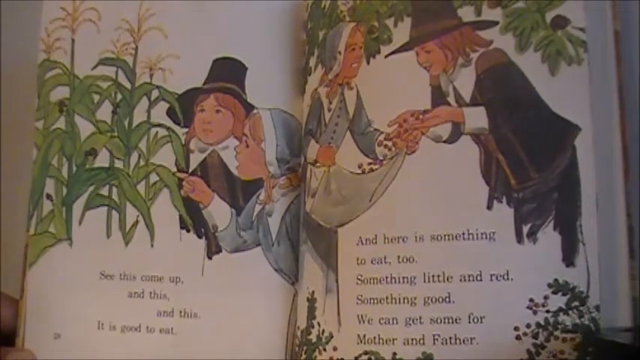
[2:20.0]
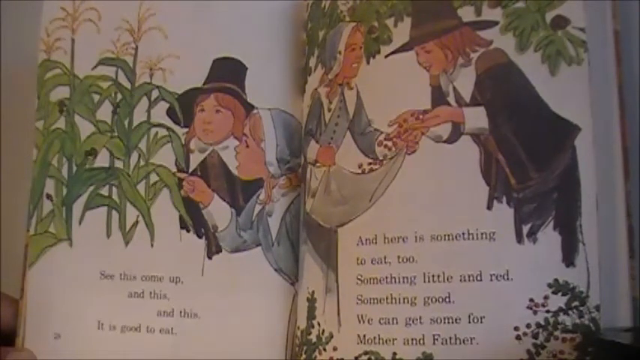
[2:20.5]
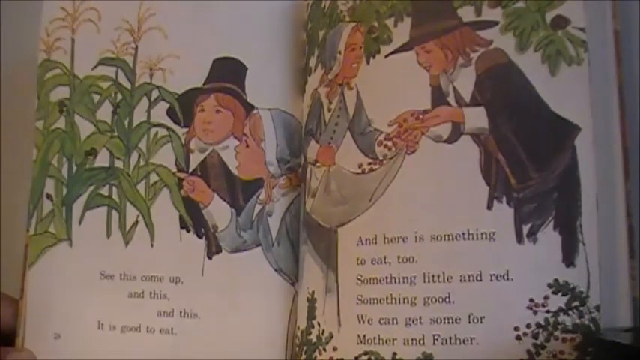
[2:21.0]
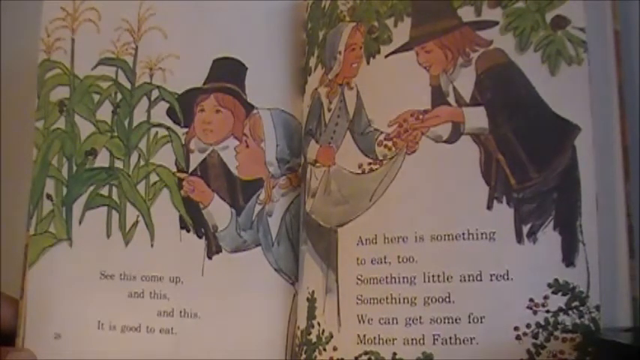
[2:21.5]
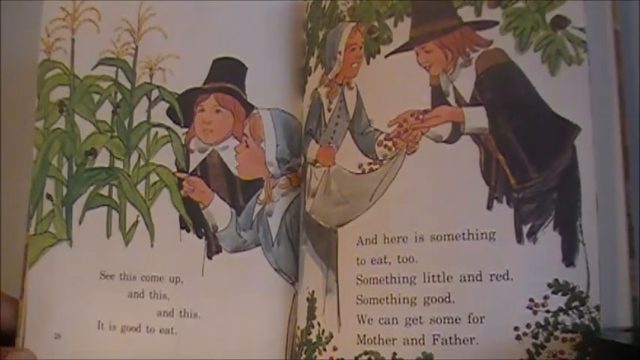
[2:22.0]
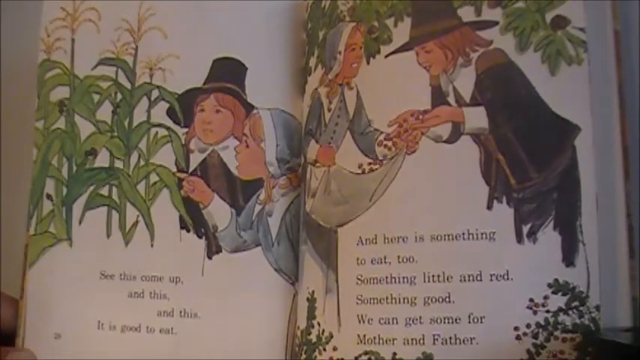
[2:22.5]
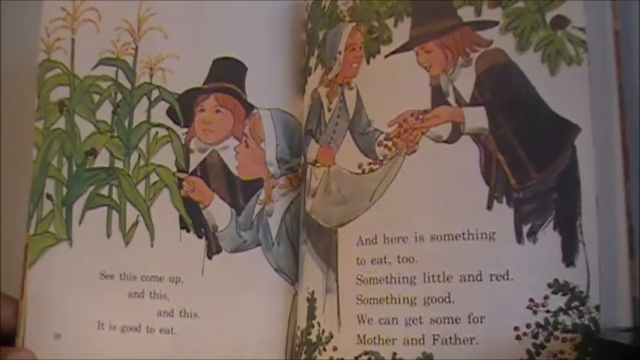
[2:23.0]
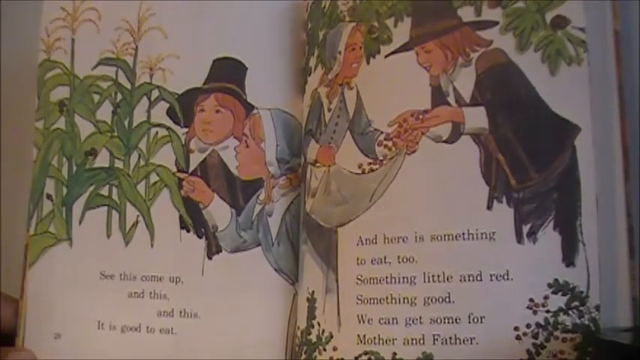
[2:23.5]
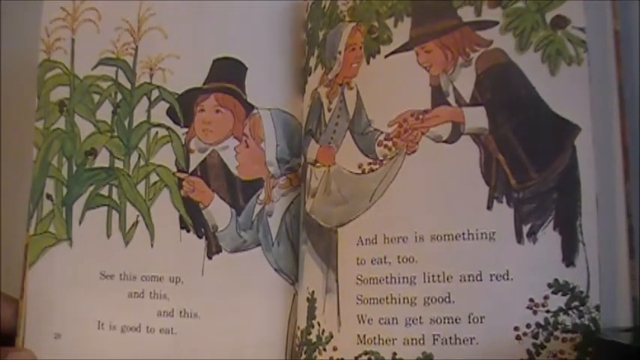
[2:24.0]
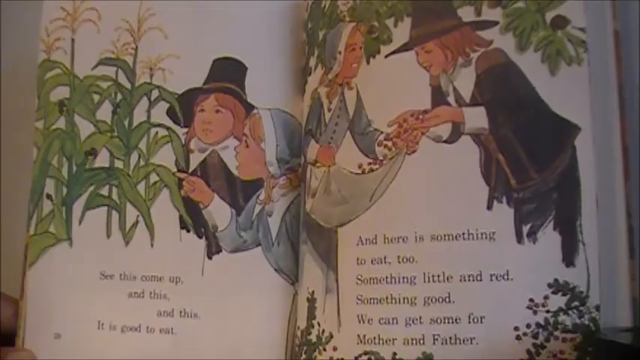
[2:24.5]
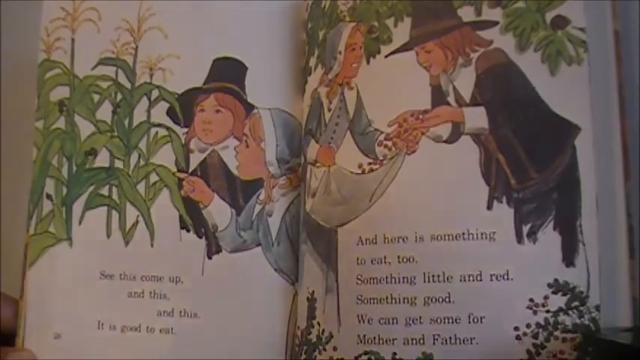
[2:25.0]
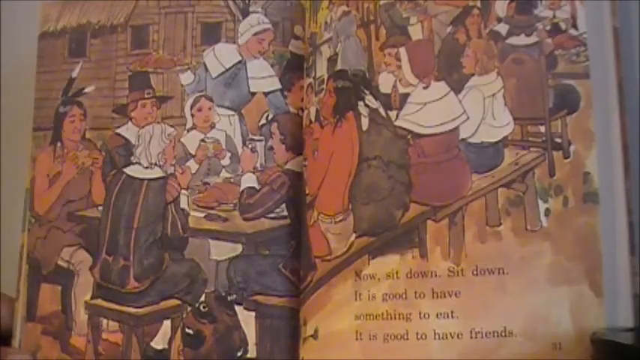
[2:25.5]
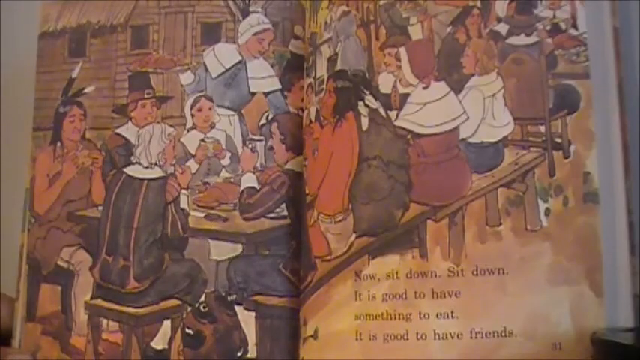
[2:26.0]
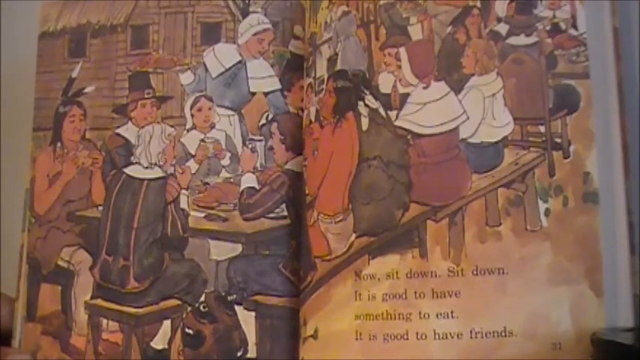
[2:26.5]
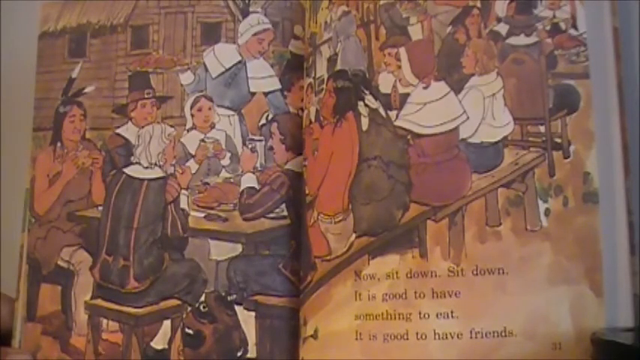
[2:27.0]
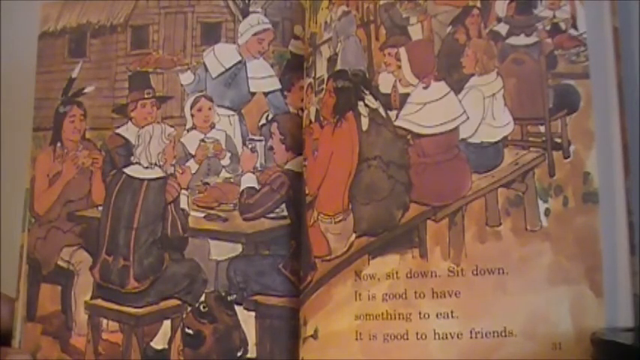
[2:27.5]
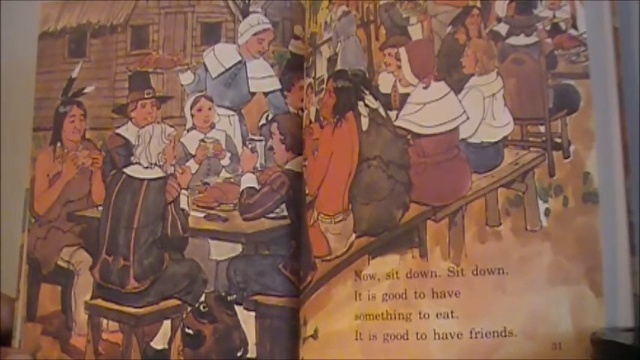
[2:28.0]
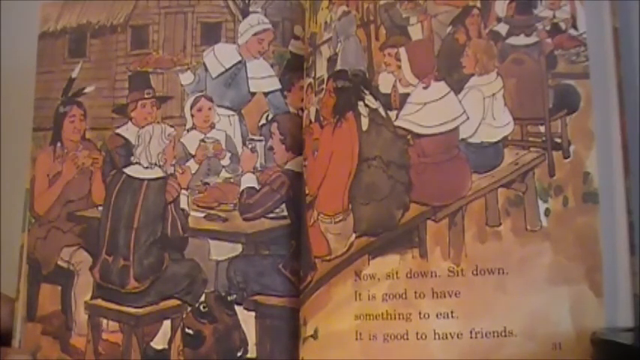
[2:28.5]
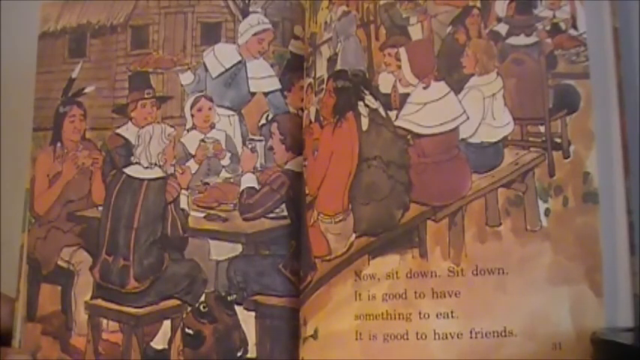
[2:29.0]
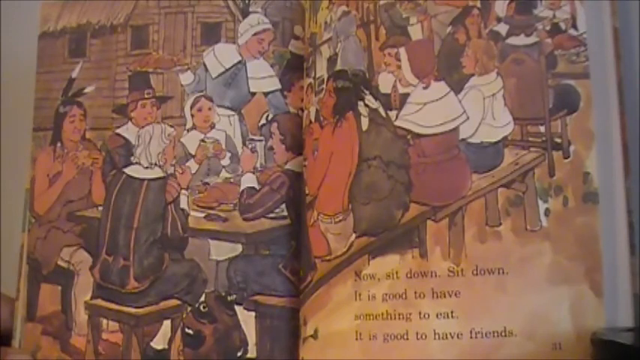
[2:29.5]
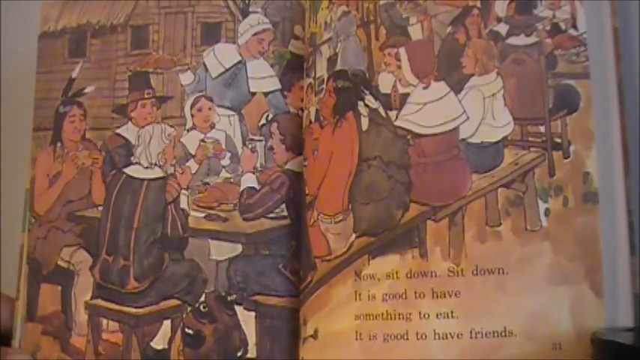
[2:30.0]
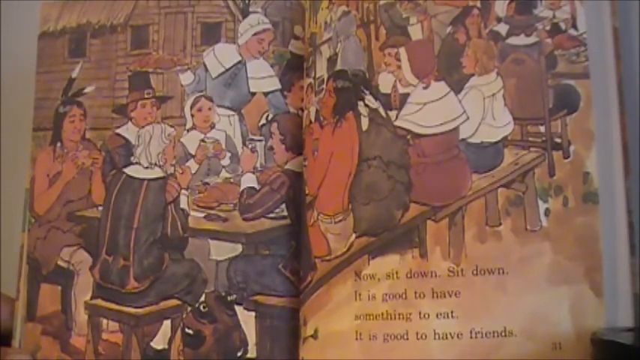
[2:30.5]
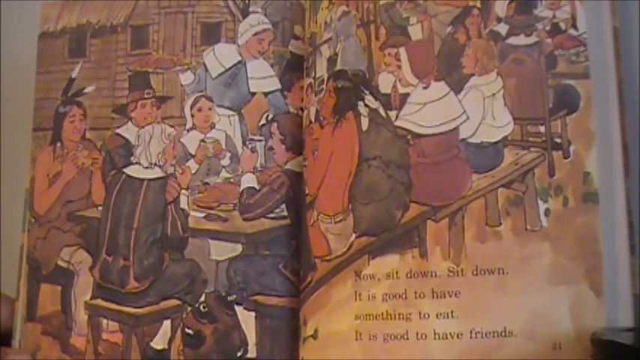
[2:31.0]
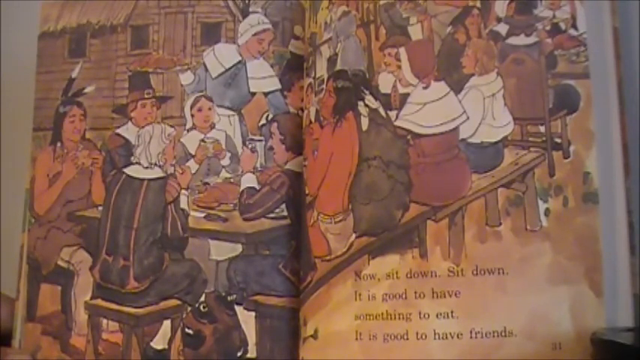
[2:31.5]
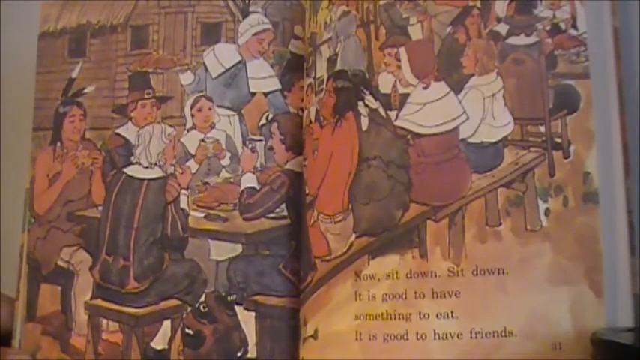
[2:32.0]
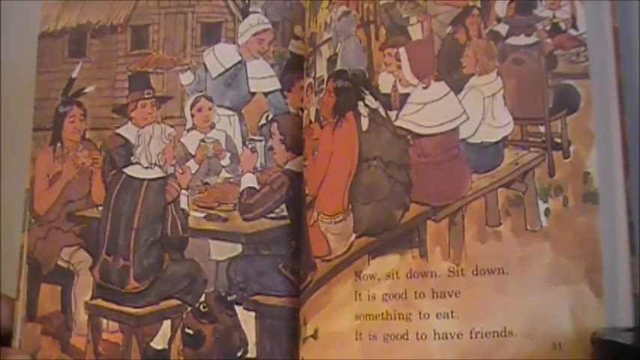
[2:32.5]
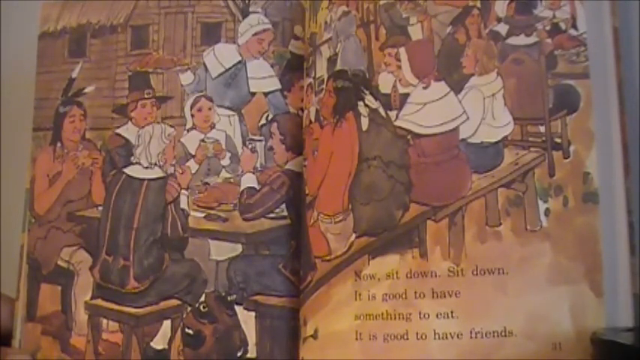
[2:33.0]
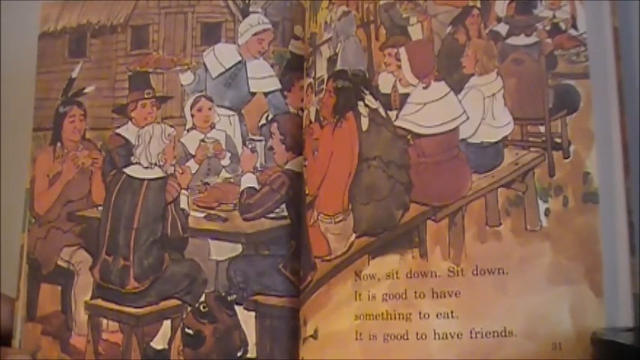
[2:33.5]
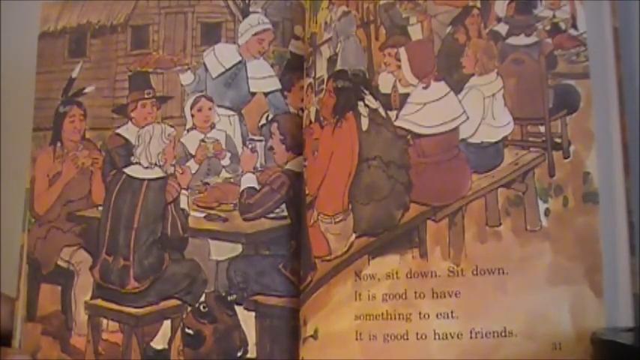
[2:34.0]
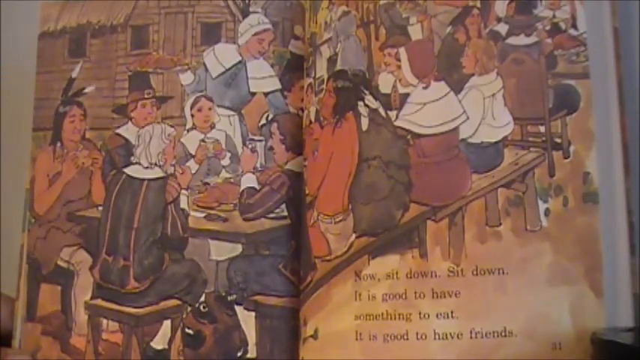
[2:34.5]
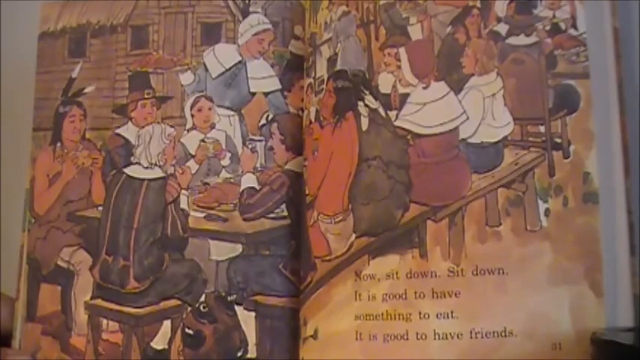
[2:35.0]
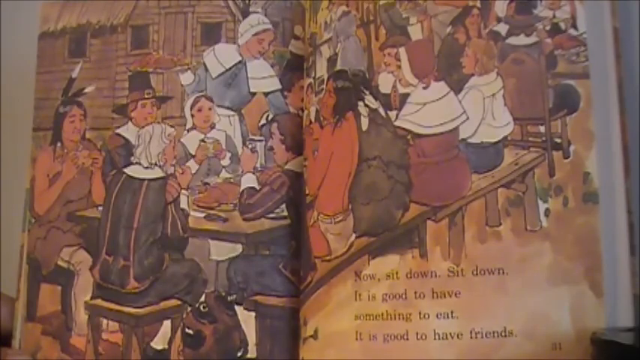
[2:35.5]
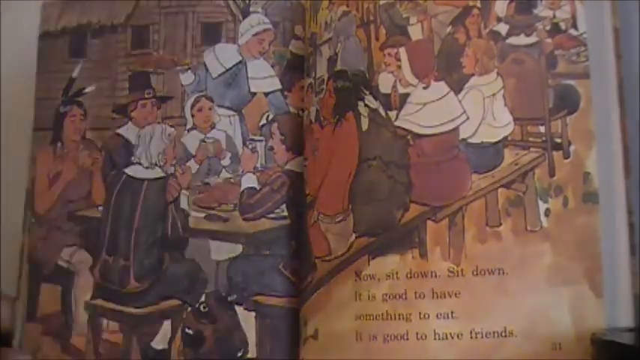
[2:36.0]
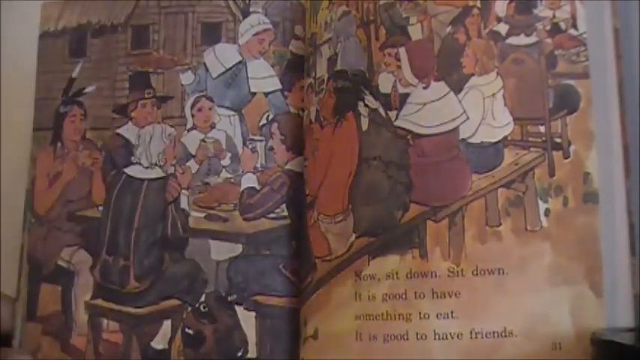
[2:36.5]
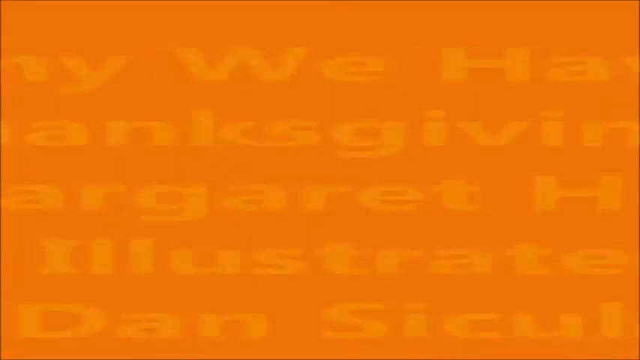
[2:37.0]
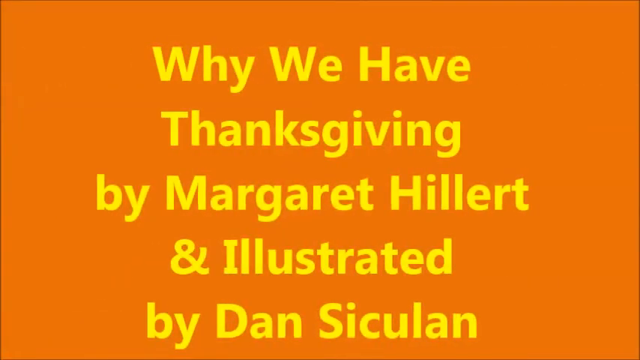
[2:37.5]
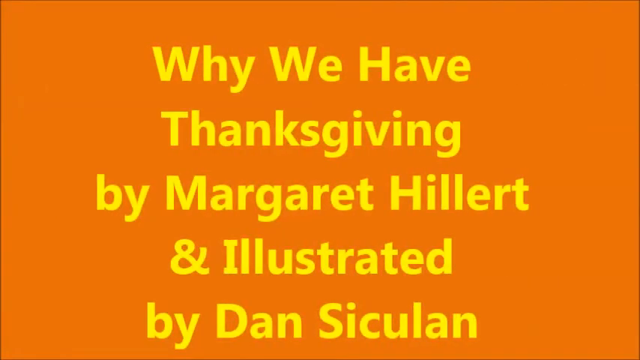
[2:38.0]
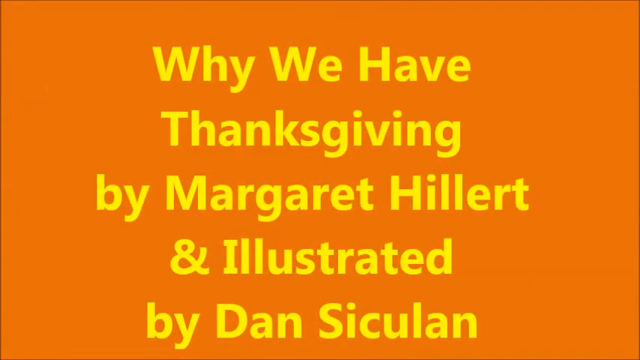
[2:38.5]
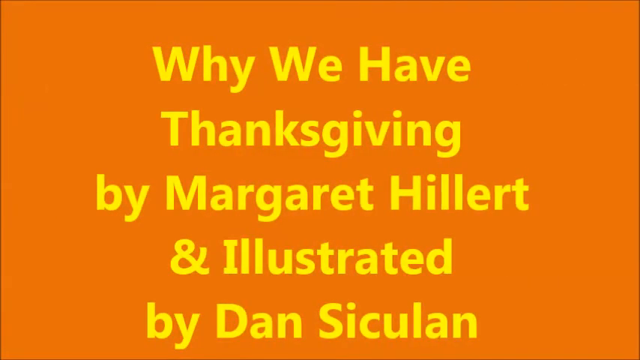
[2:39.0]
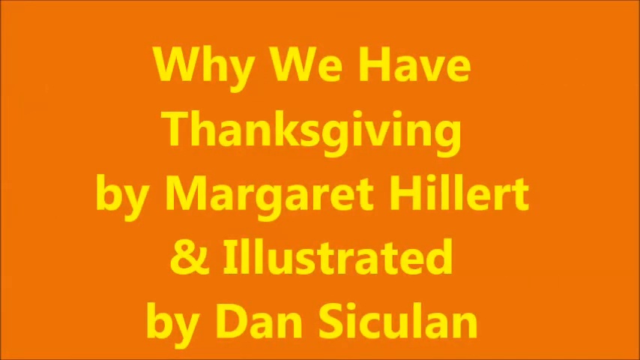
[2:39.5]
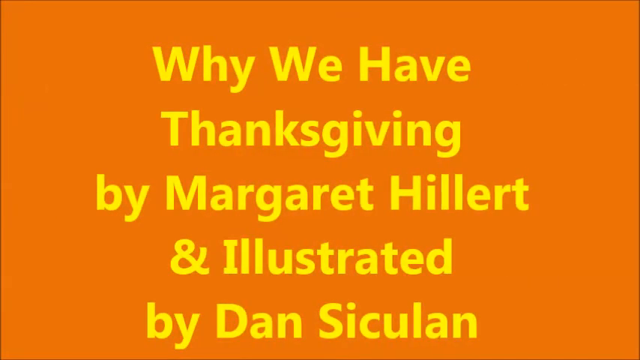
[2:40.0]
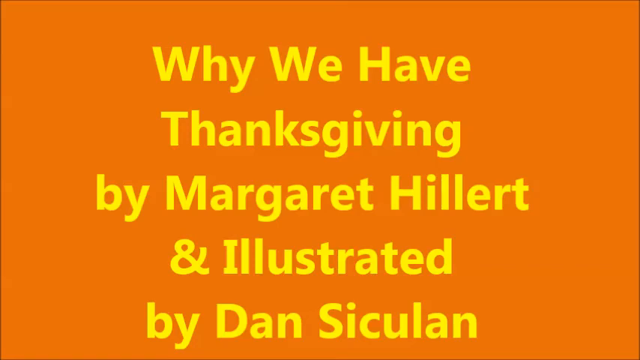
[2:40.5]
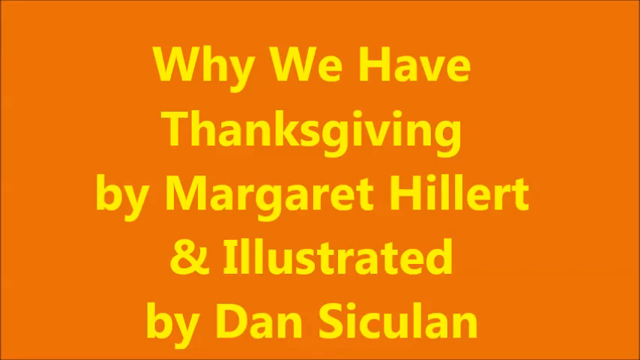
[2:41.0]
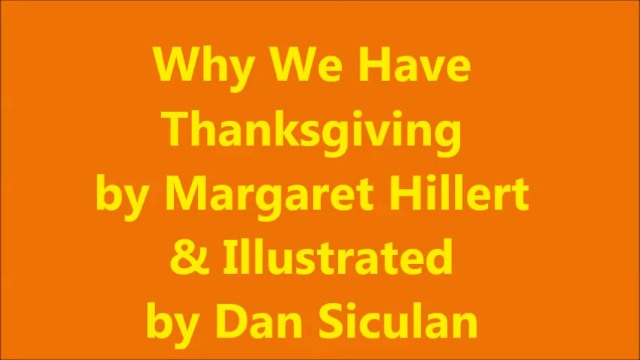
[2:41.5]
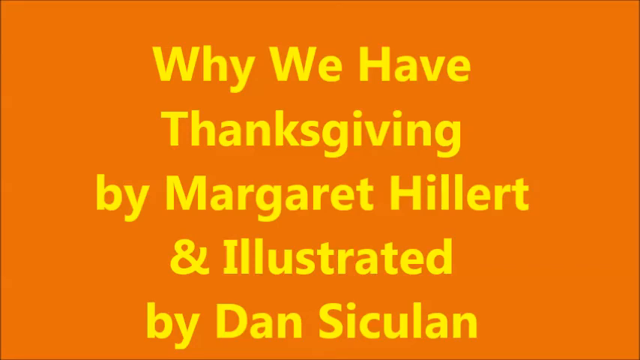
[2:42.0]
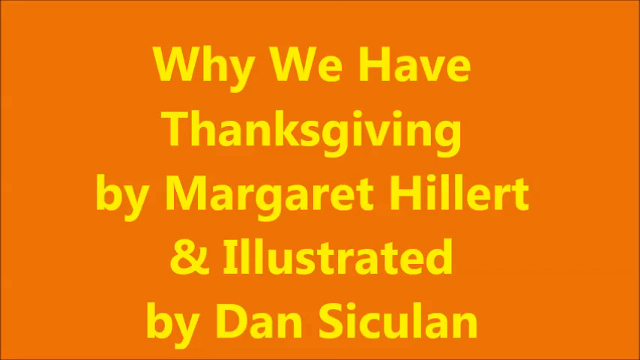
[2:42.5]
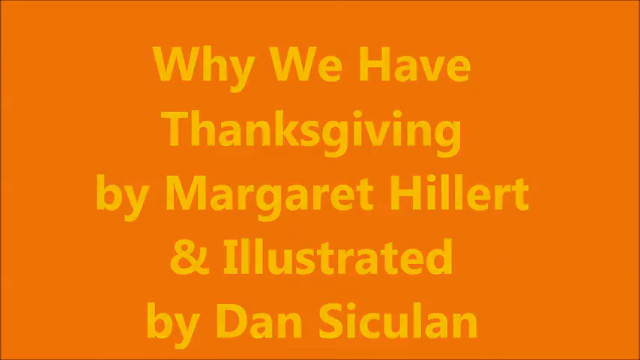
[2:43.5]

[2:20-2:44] The next pages form a big double spread of a group of people sitting at a long table. There are pilgrims in the typical all-black garb, and pilgrim women in lighter blue dresses with their heads covered. There also seem to be more people of European descent wearing more elaborate costumes, and there also look to be two American Indian men, both with feathers in their hair and their hair in plaits. They all seem to be eating and sharing a meal together, presumably the Thanksgiving meal. What is on the table cannot really be seen, but everyone looks like they are holding something in their hands. This seems to be the last page of the book. The final title card gives the title of the book again: Why We Have Thanksgiving by Margaret Hillard, illustrated by Dan Siculan.